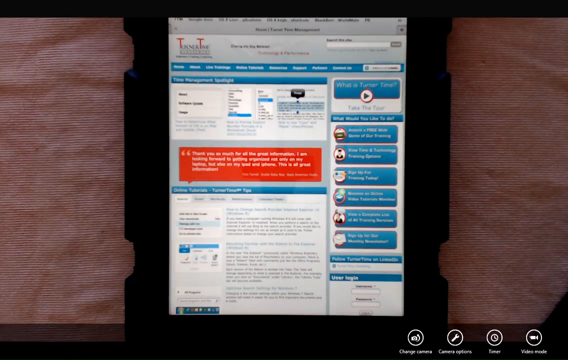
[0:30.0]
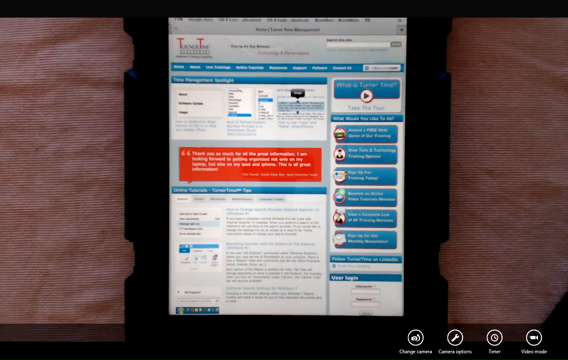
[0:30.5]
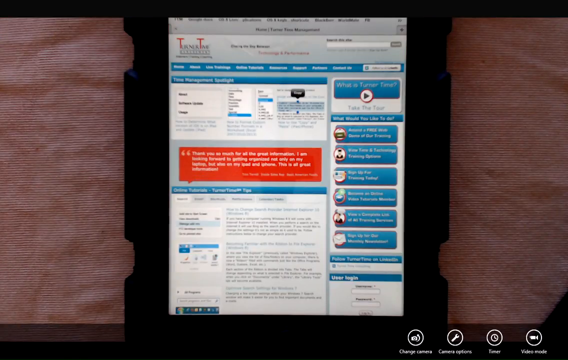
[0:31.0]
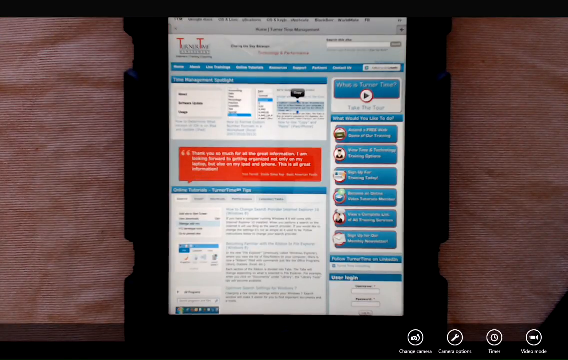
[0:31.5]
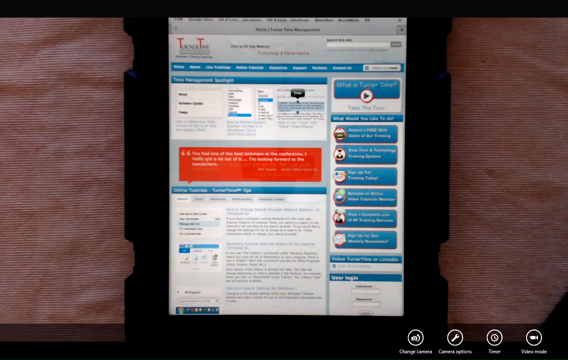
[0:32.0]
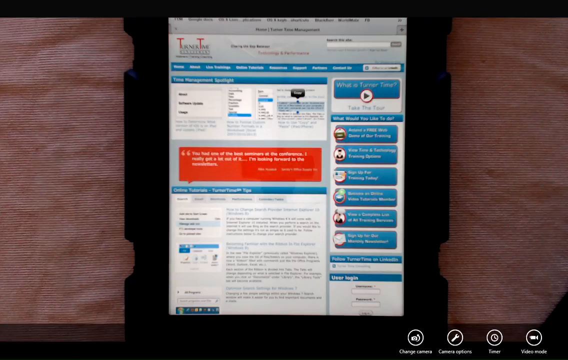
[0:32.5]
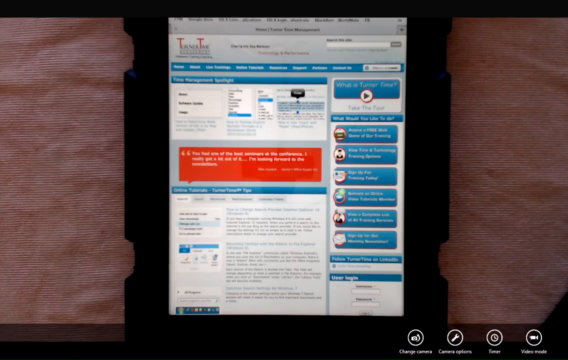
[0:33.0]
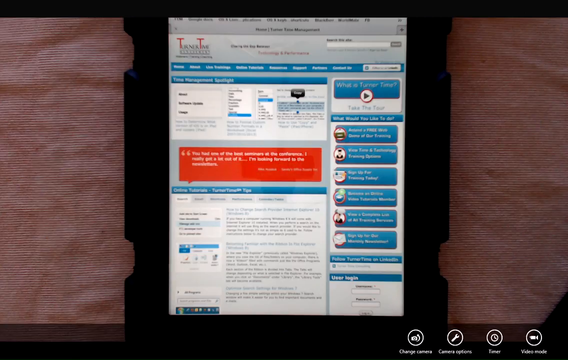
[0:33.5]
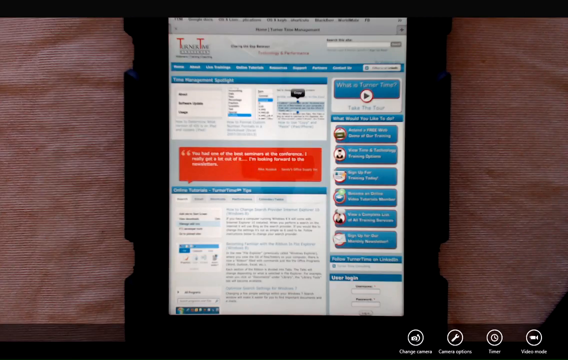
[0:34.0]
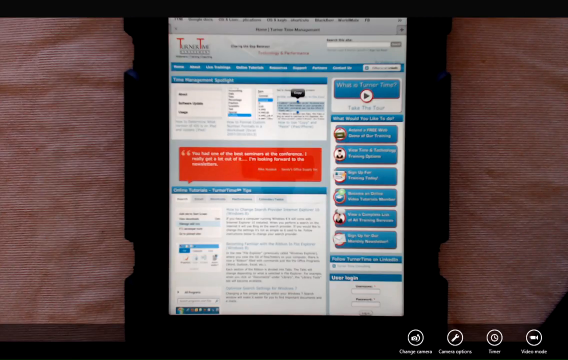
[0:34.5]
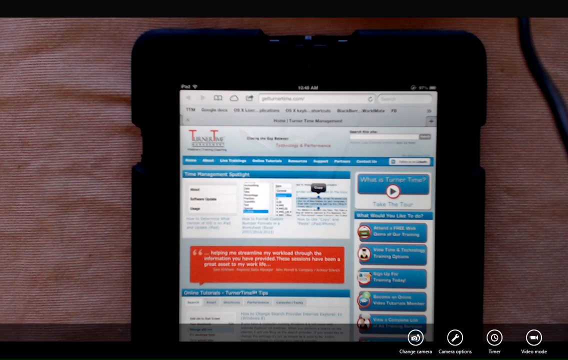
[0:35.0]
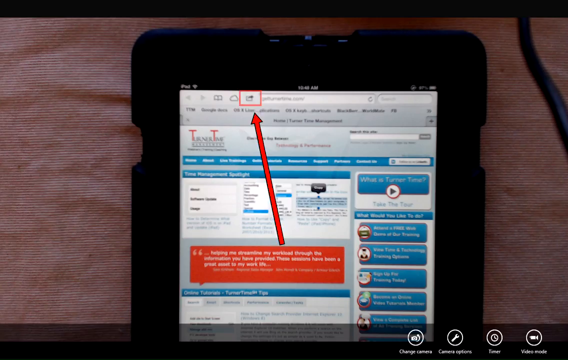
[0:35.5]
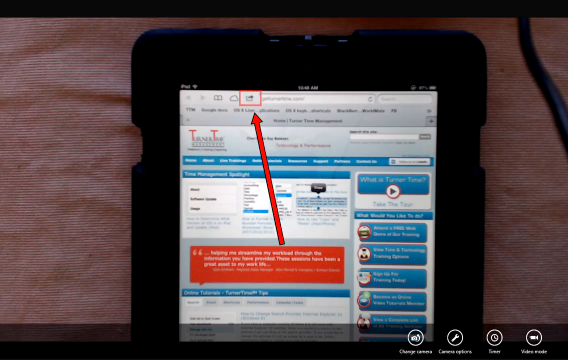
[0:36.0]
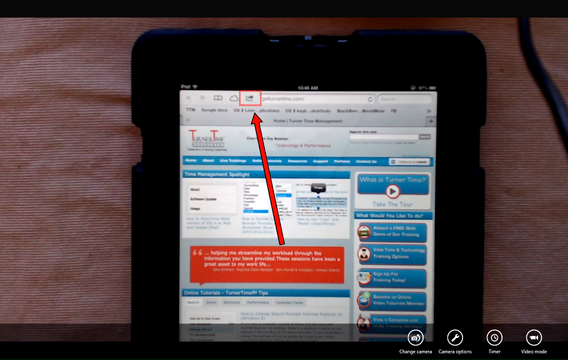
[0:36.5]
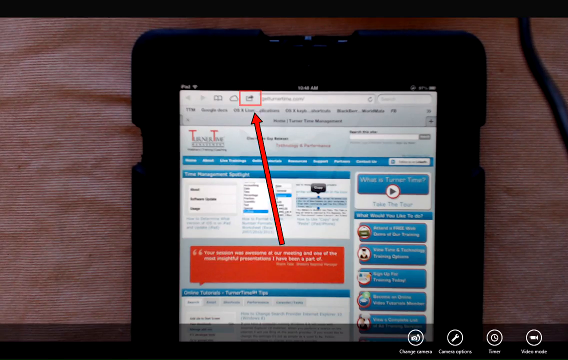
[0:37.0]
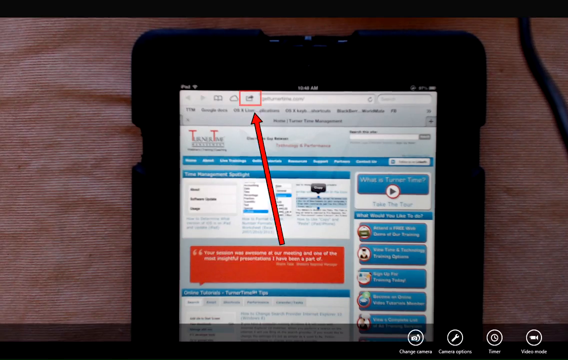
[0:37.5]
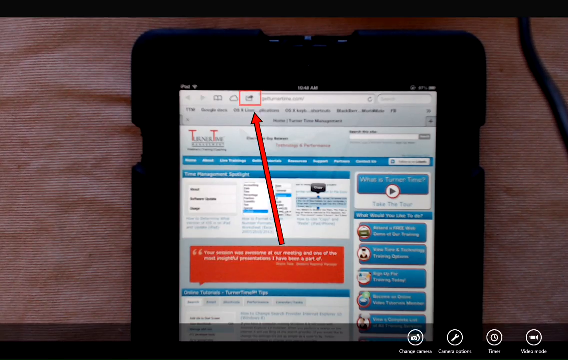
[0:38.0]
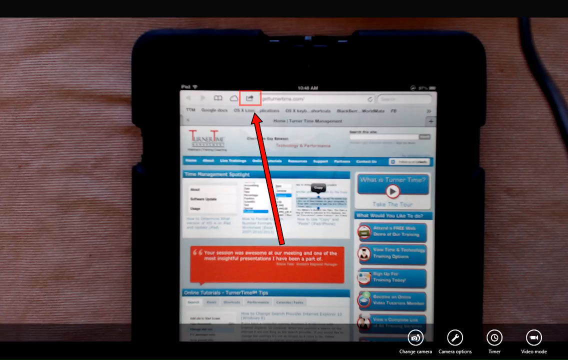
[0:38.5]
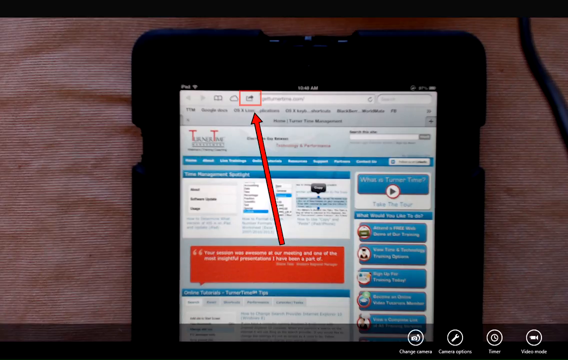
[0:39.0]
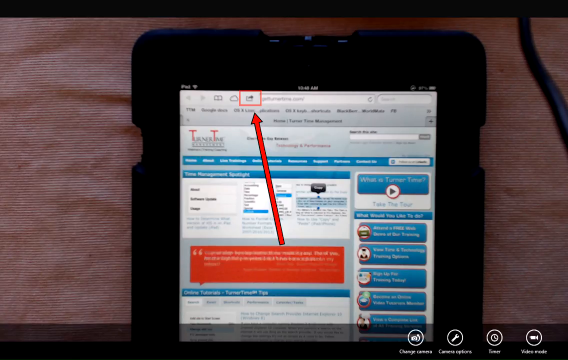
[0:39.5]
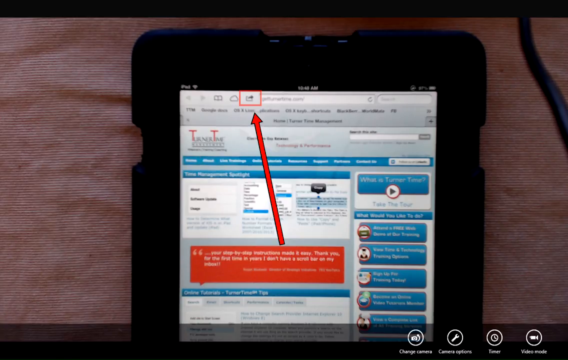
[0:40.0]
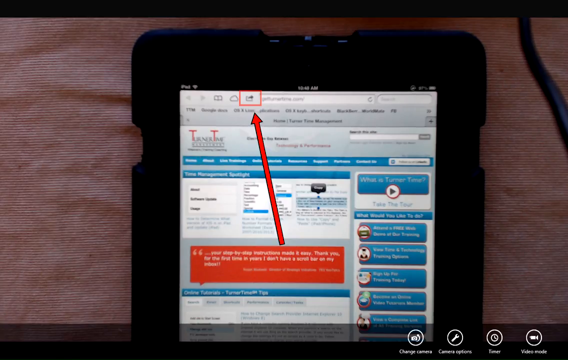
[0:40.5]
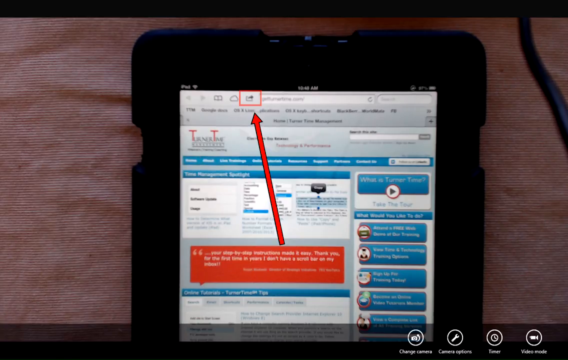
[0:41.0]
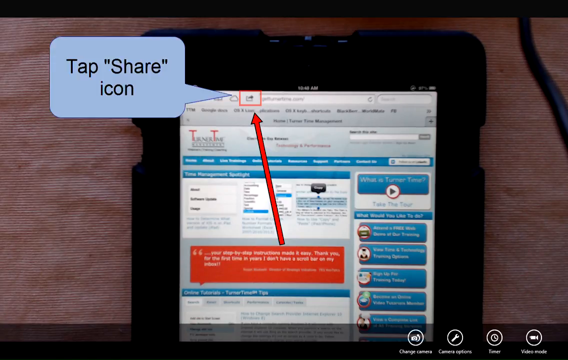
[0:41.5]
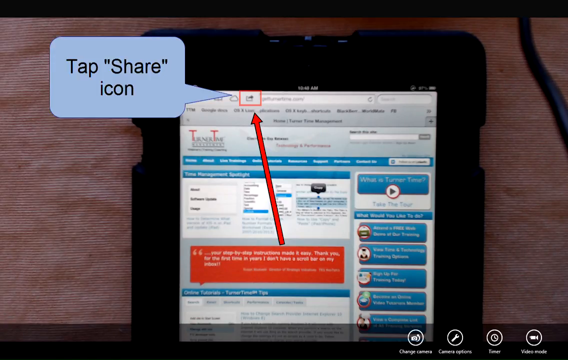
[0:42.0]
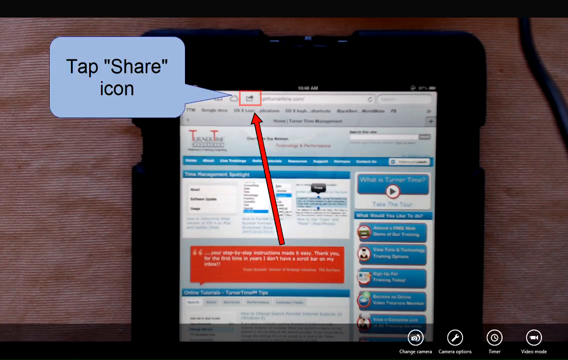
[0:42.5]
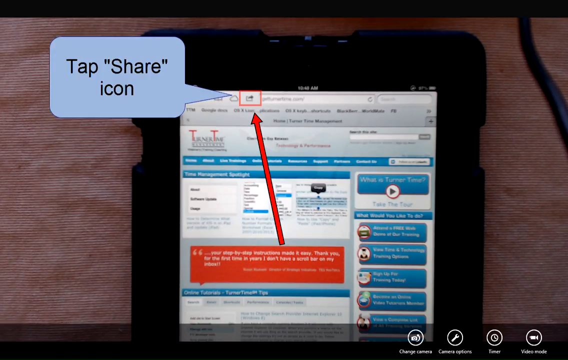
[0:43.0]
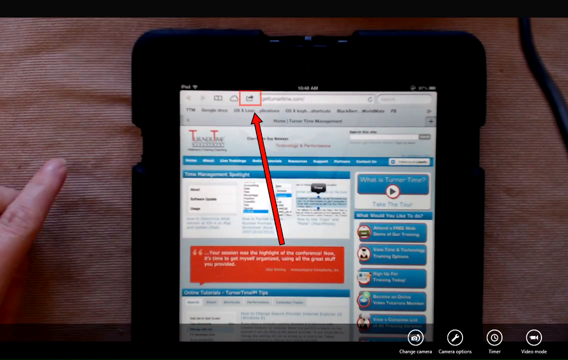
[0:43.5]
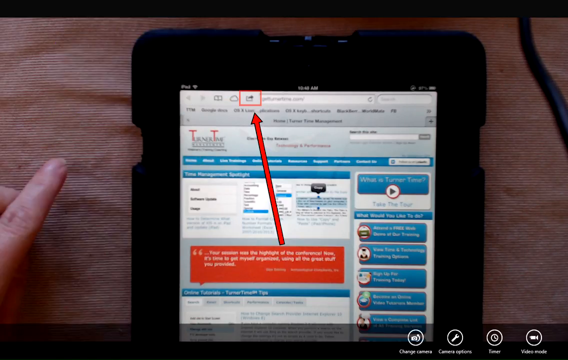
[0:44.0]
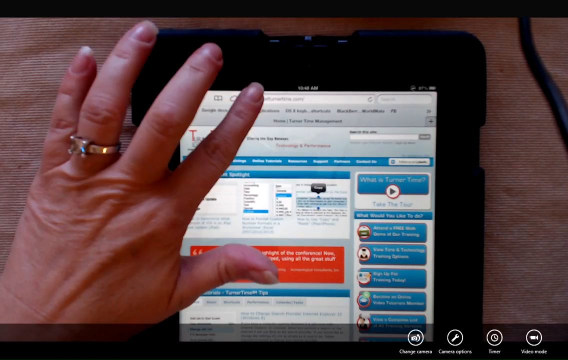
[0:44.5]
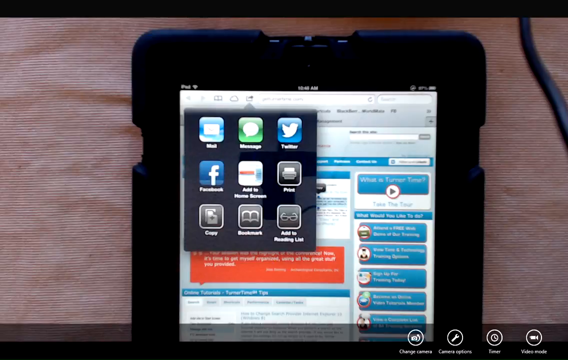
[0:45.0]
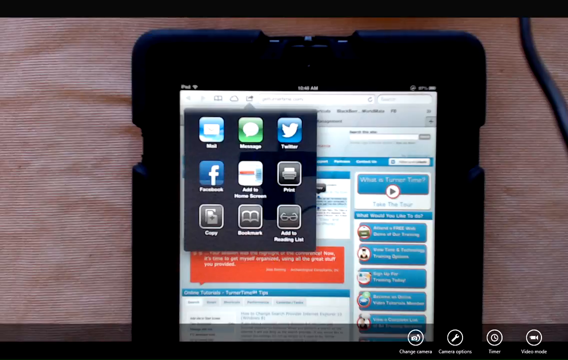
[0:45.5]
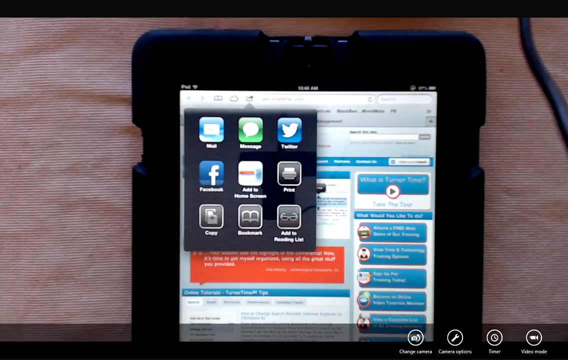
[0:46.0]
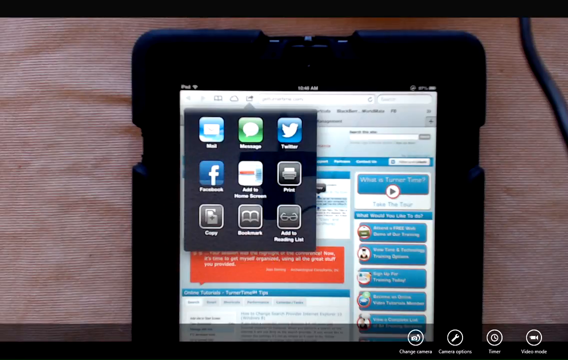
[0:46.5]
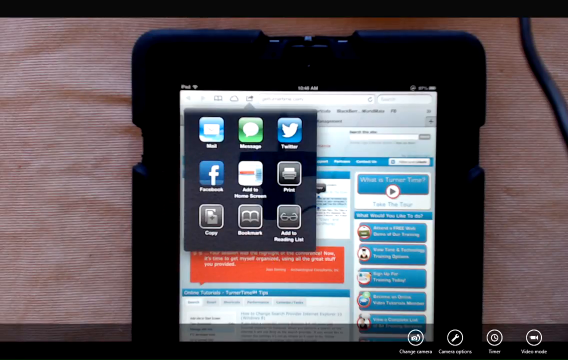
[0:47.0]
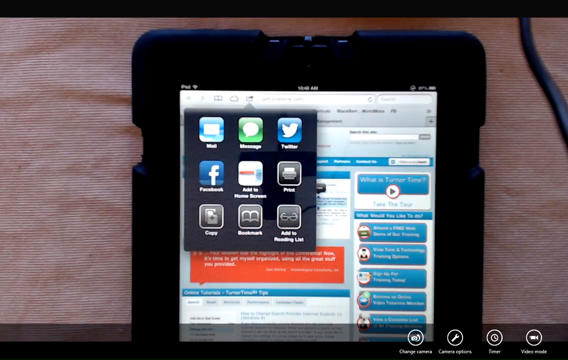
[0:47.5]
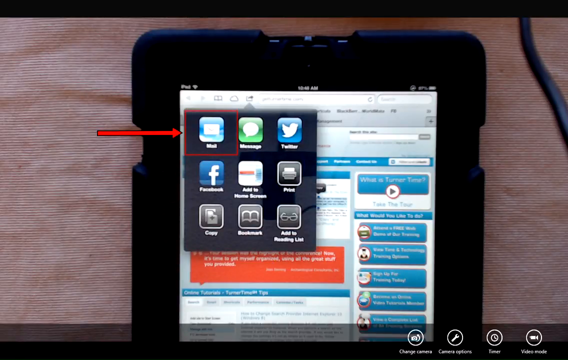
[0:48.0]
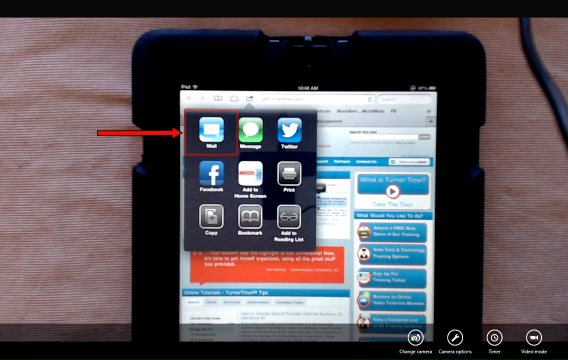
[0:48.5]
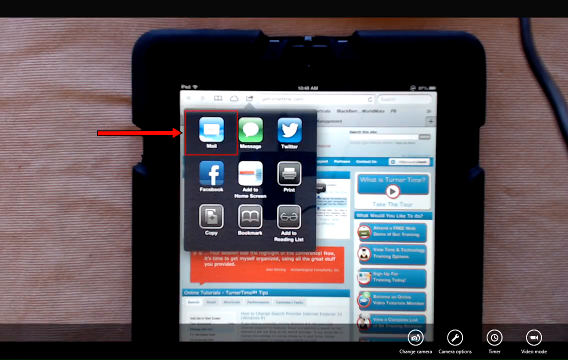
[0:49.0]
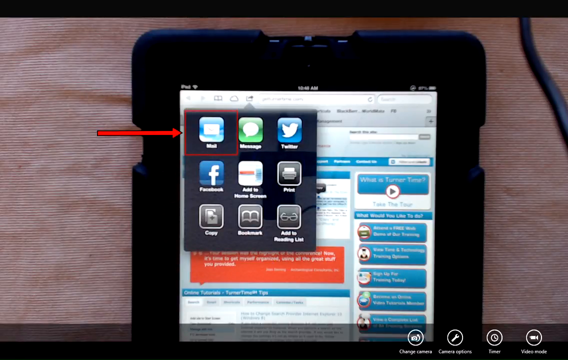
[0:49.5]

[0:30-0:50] The tablet's display has the Turner Time web page loaded, with several different articles, texts and columns on the screen. A set of hands appears, one on each side of the device, briefly as if repositioning it, then the hands disappear. The camera zooms in to the top portion of the tablet and focuses on the web address bar, where a section is highlighted with a red box and a long red arrow from the center of the screen points up to the red box. This stays on screen for several seconds before a "tap share icon" chat bubble pops up to the left of the red outline box.